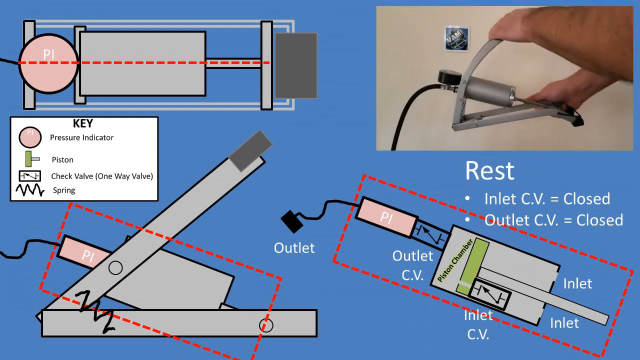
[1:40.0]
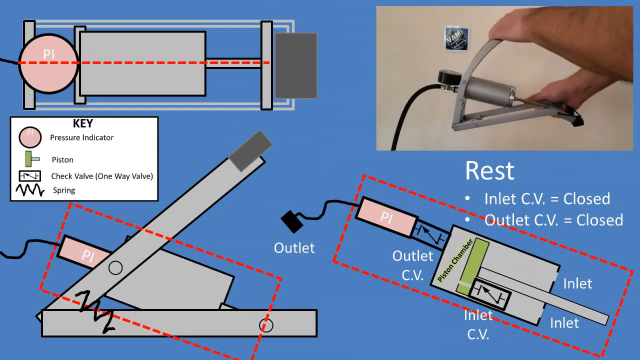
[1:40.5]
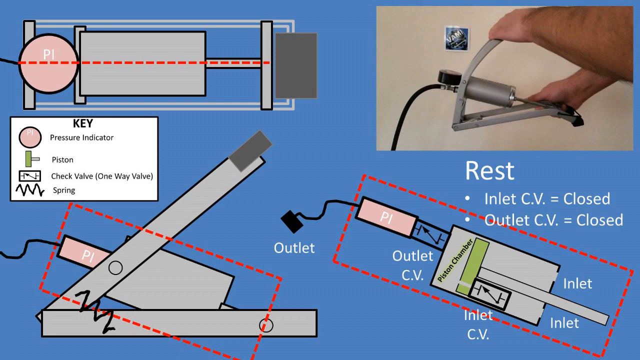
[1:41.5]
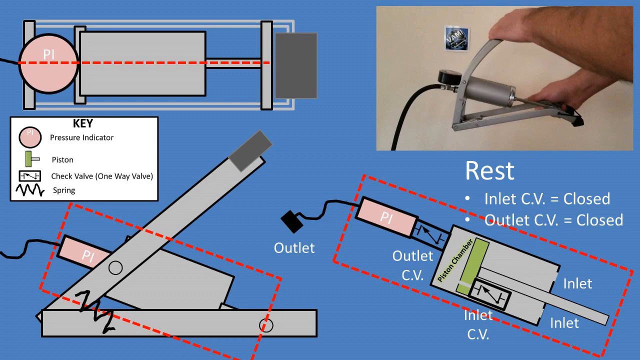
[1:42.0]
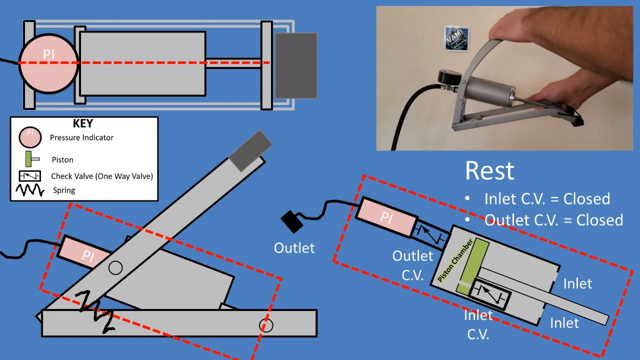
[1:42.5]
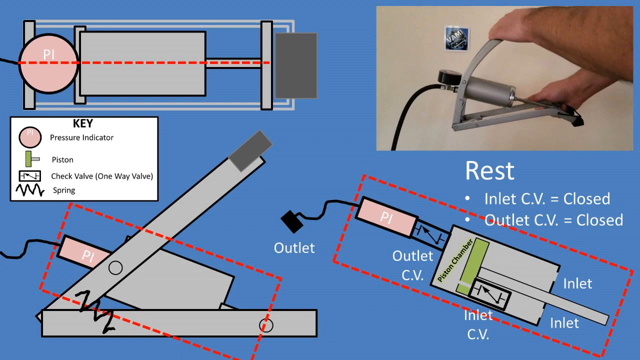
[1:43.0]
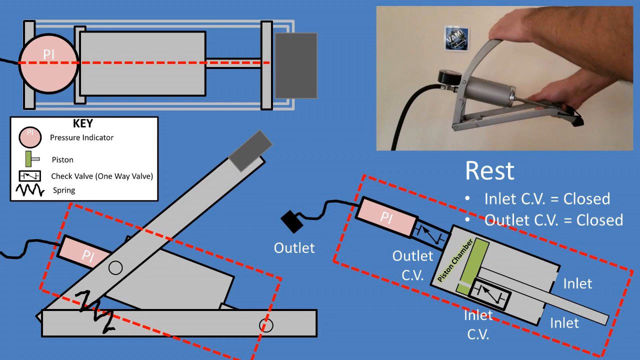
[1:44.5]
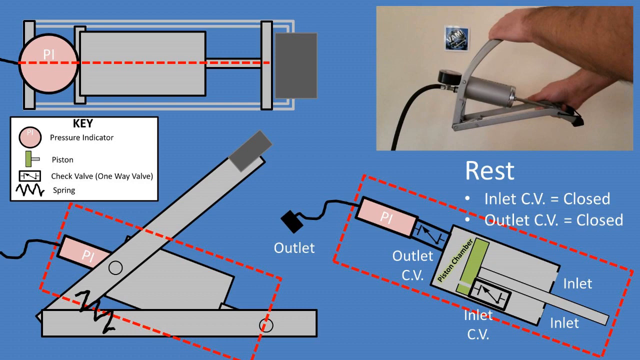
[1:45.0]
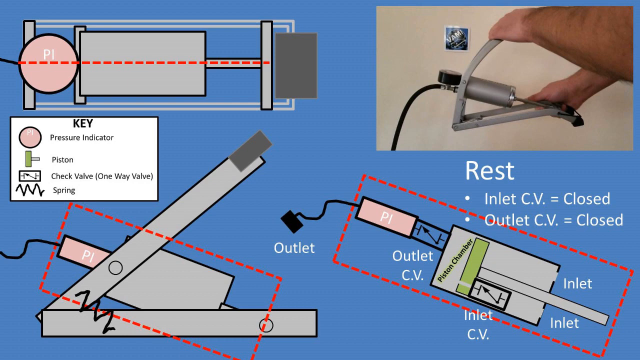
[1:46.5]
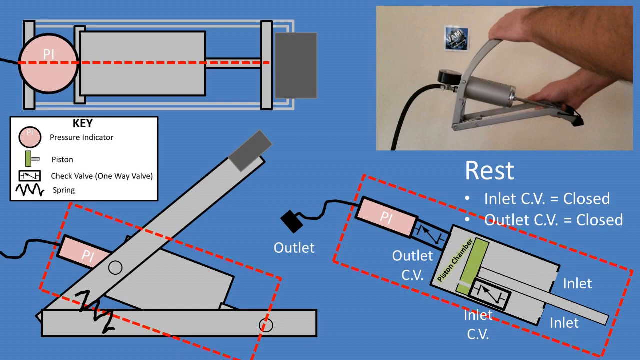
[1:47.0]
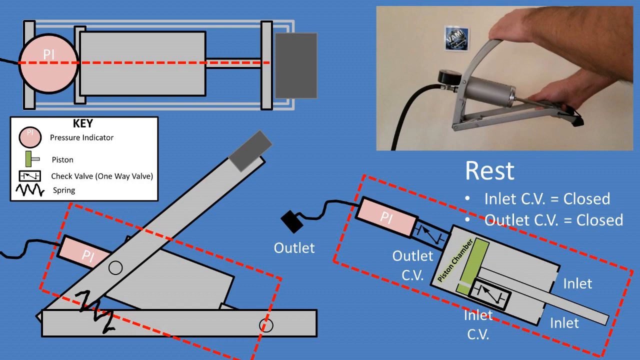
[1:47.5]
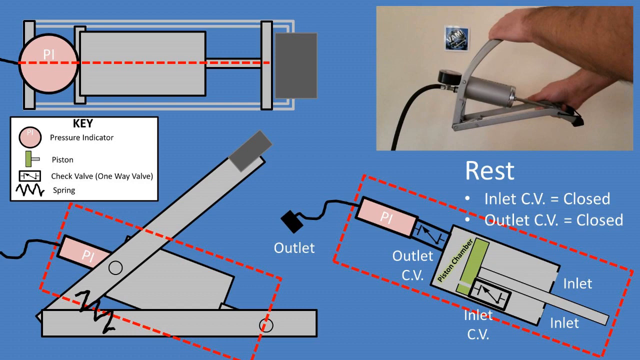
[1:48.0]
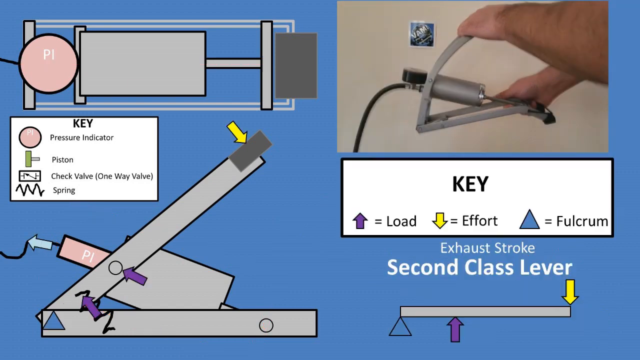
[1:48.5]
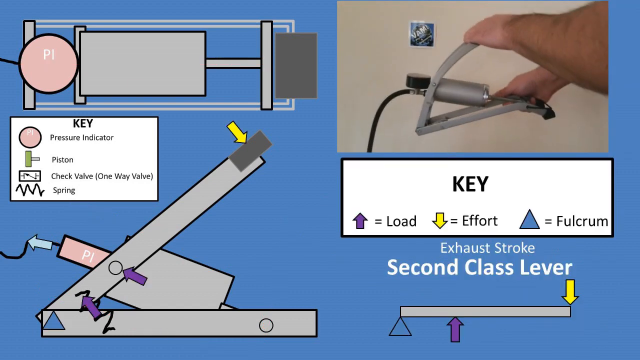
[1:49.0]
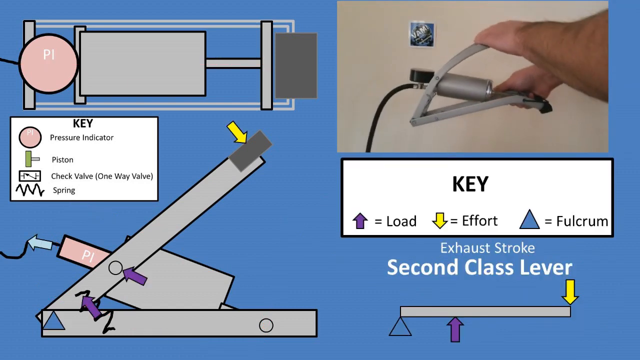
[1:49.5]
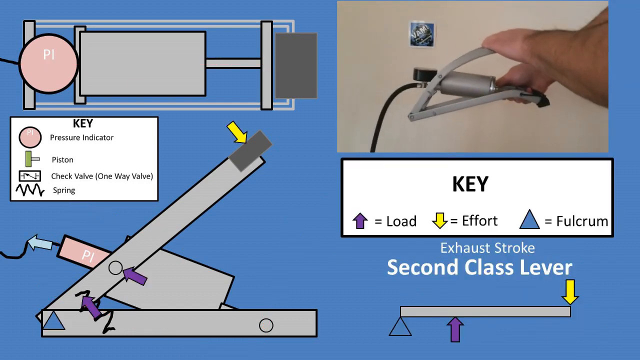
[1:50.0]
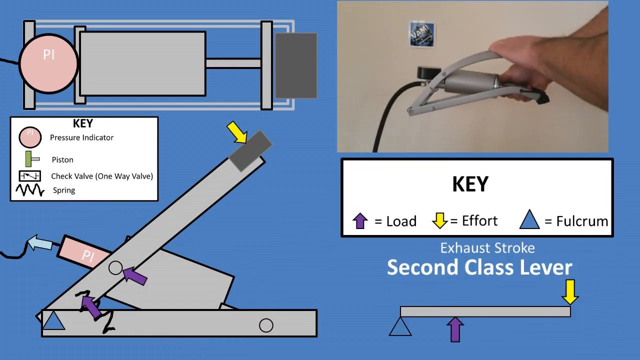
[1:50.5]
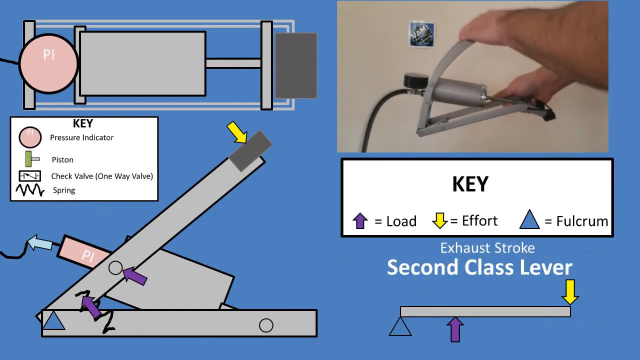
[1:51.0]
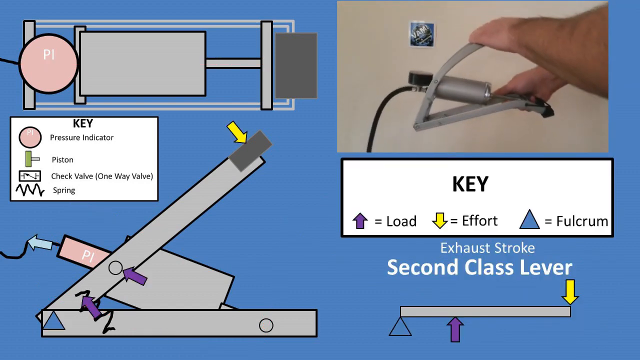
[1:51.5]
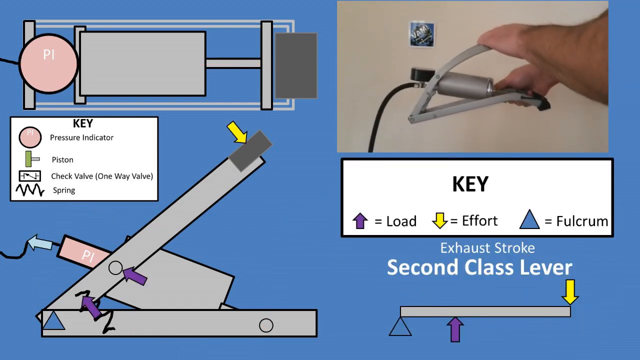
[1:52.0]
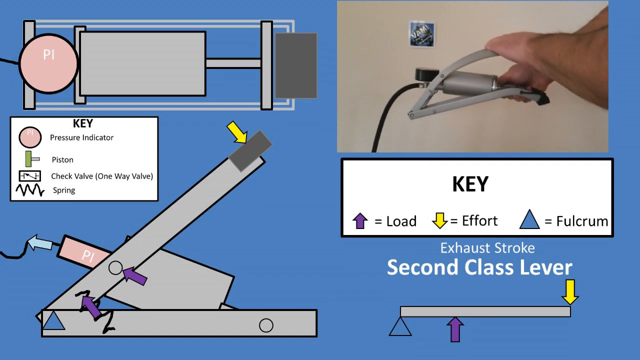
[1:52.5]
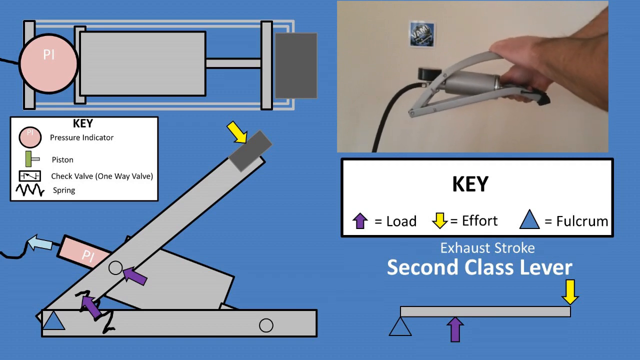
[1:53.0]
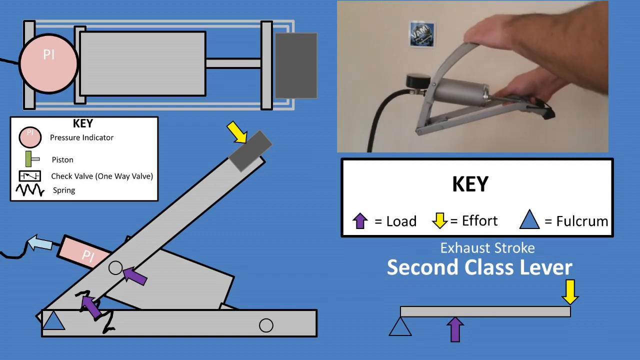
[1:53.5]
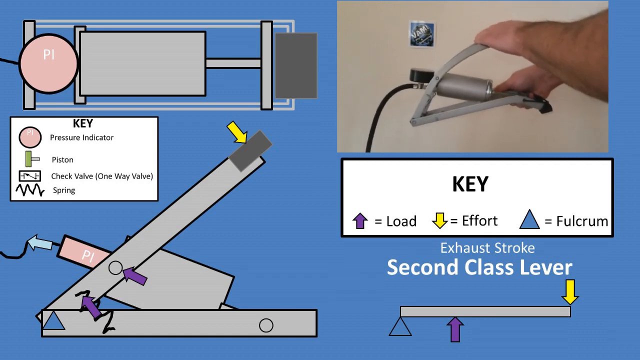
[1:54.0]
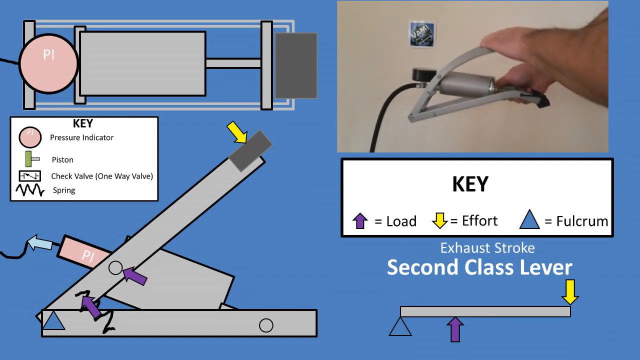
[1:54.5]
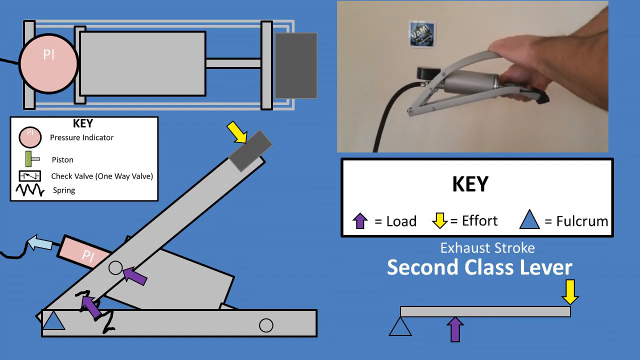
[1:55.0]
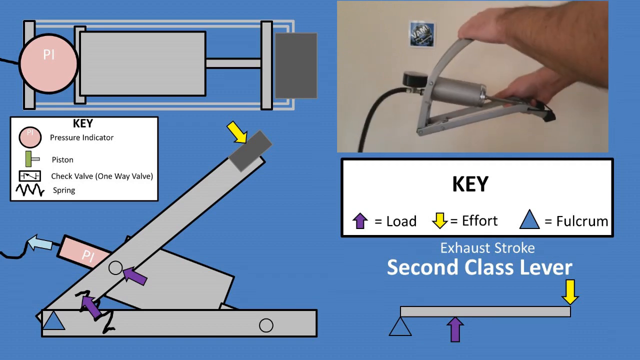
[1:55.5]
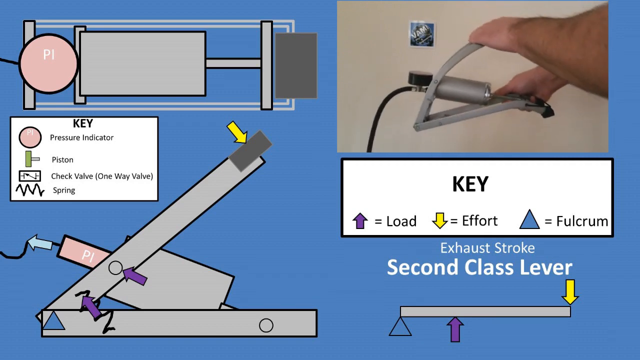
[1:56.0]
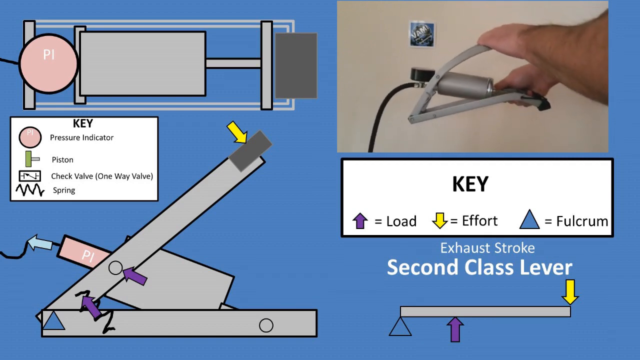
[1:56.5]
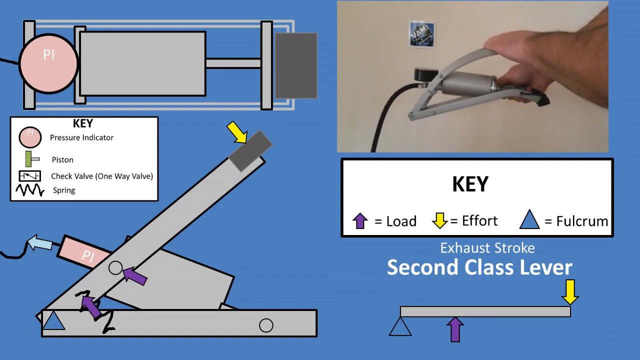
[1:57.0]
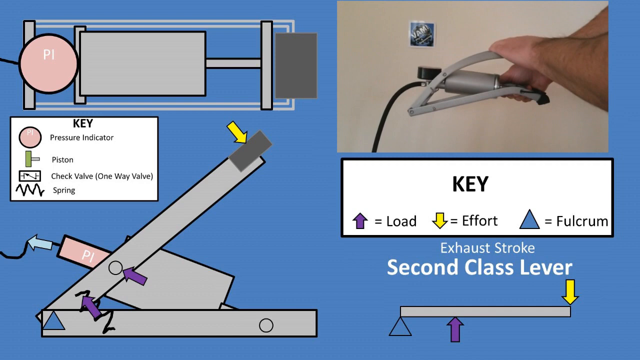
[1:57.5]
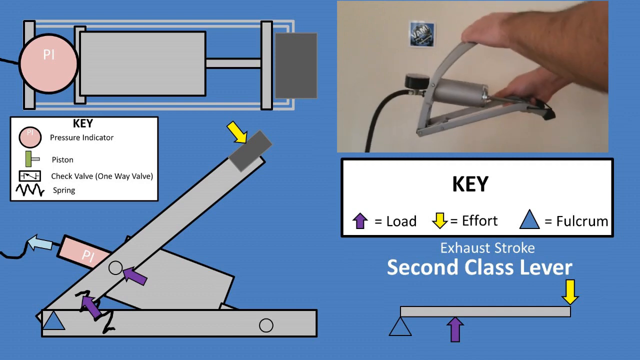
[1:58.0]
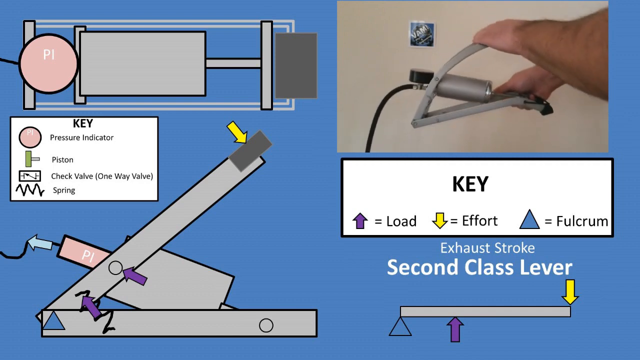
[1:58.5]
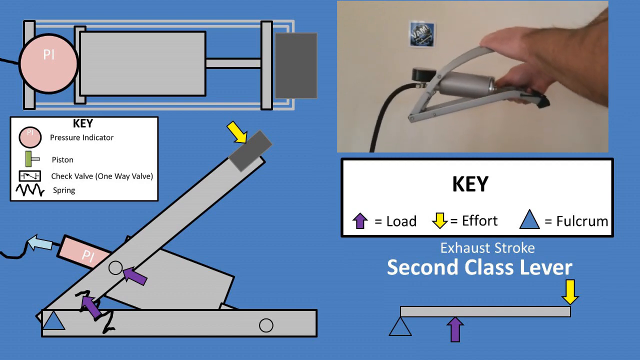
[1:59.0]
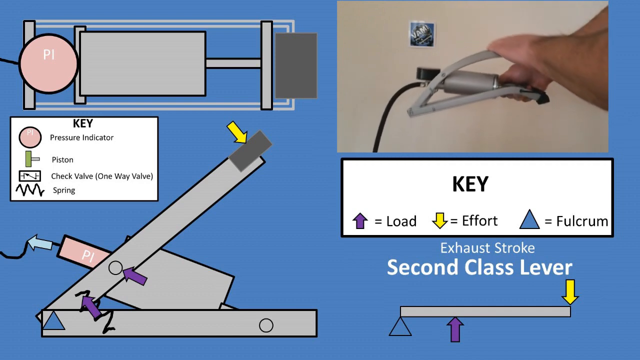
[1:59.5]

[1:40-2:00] Initially nothing moves or changes. Then a new key appears in a white box with a black border: a purple arrow means load, a yellow arrow means effort, and a blue triangle indicates the fulcrum. For the exhaust stroke, the hand lever in the lower right diagram, shown as a long gray skinny rectangle, has a yellow downward-pointing arrow on the far right of this horizontal linear piece of metal. The lower left diagram now shows a yellow arrow on the end of the lever pointing to the lower right, and two purple arrows pointing to the upper left on the spring and on the middle section where the piston is located. The fulcrum is between the two long pieces, where they connect to each other.